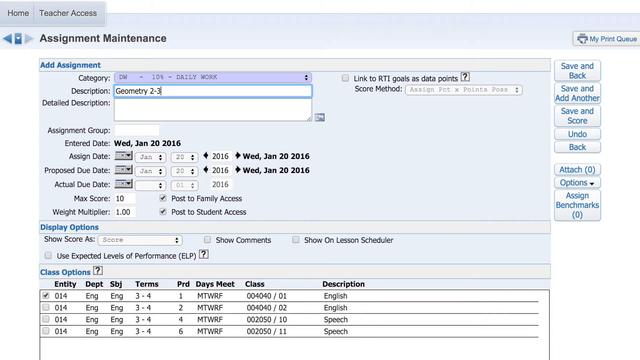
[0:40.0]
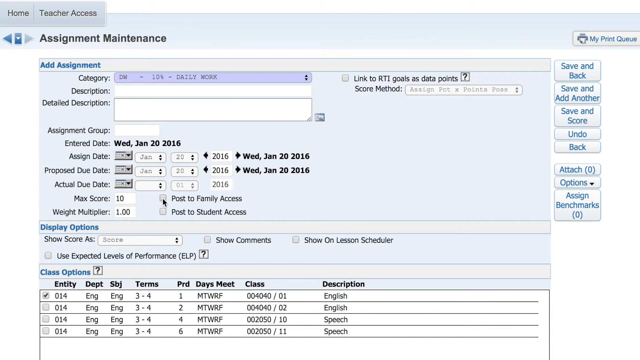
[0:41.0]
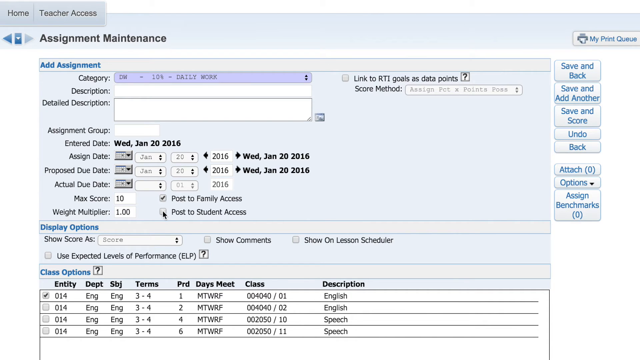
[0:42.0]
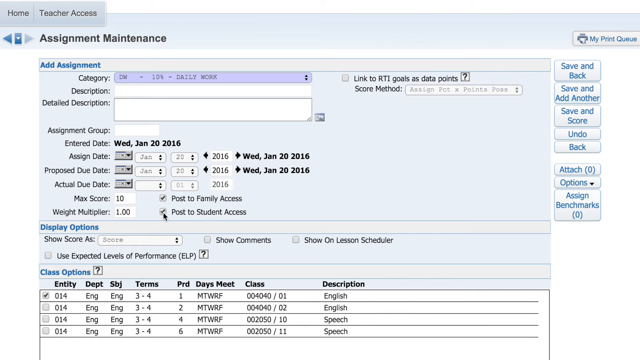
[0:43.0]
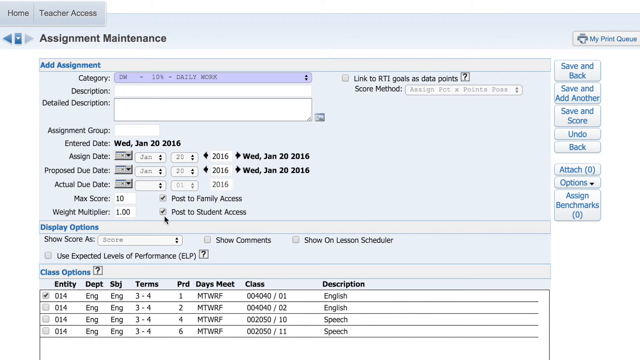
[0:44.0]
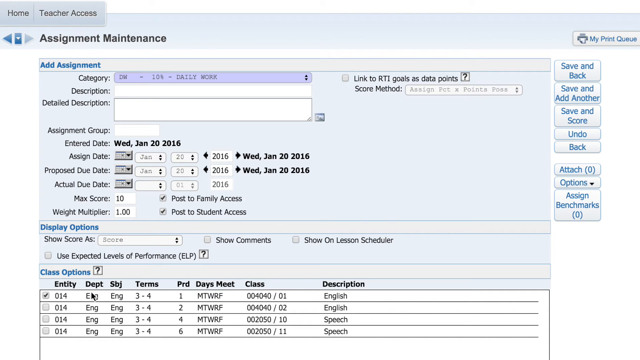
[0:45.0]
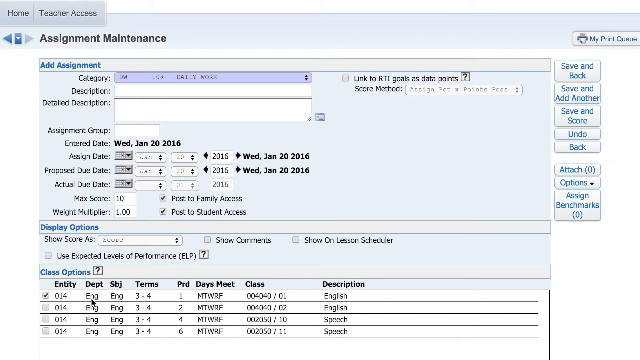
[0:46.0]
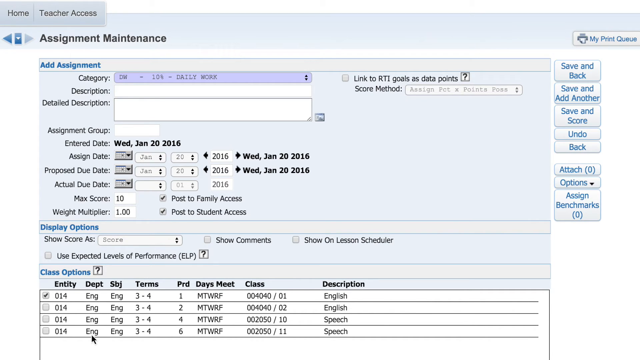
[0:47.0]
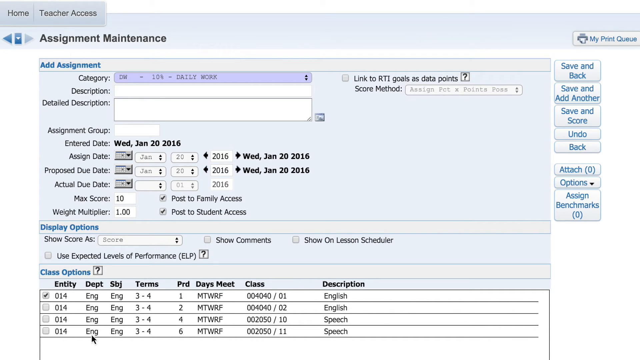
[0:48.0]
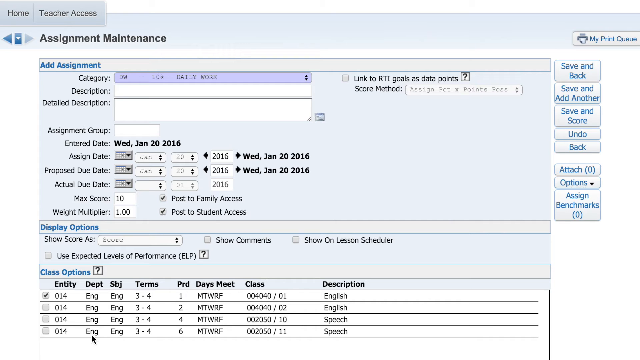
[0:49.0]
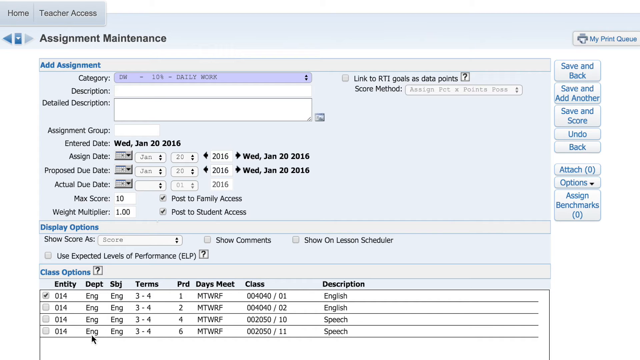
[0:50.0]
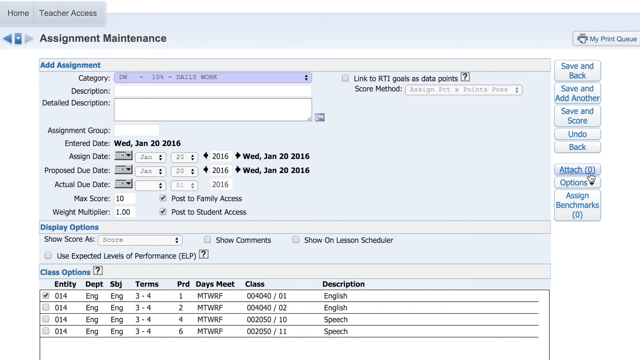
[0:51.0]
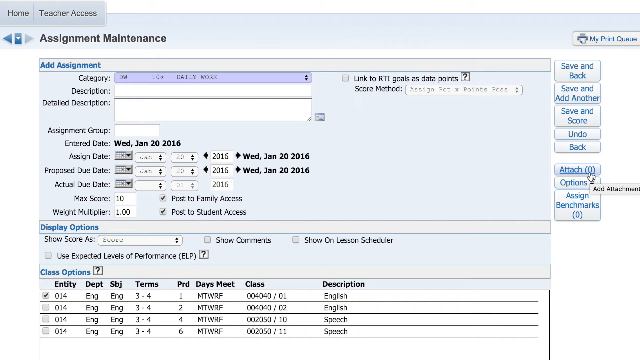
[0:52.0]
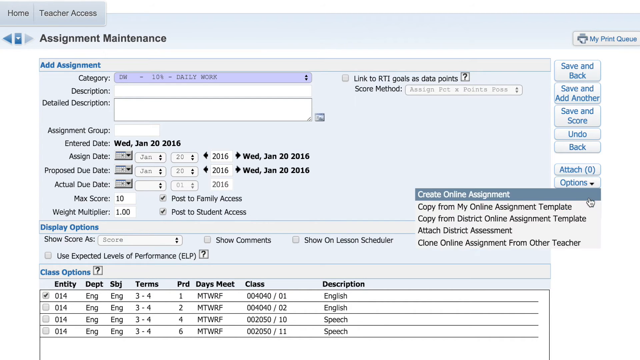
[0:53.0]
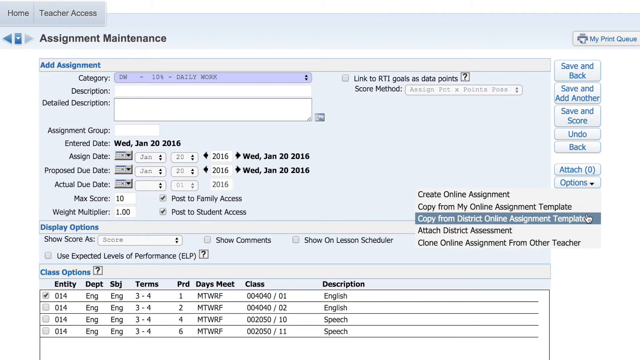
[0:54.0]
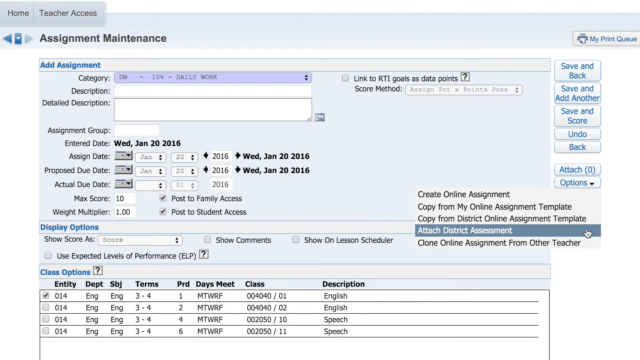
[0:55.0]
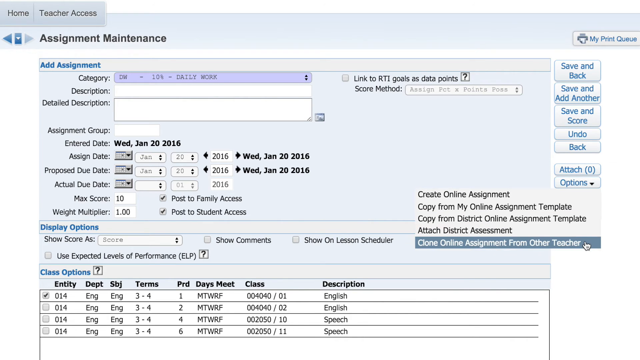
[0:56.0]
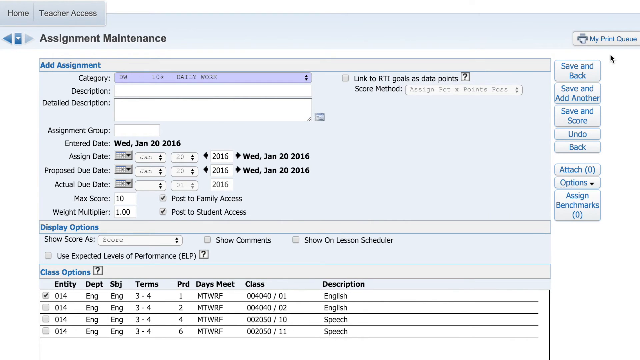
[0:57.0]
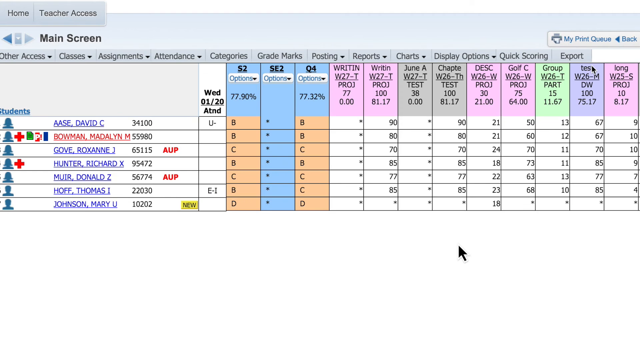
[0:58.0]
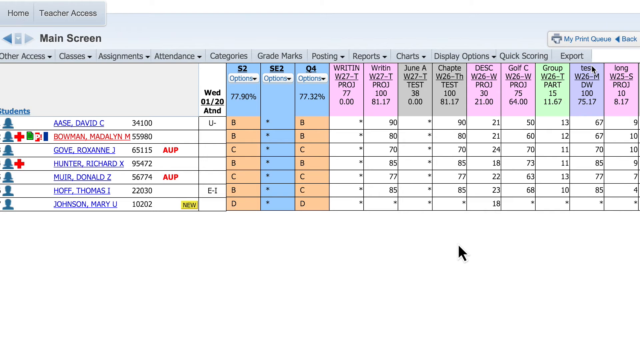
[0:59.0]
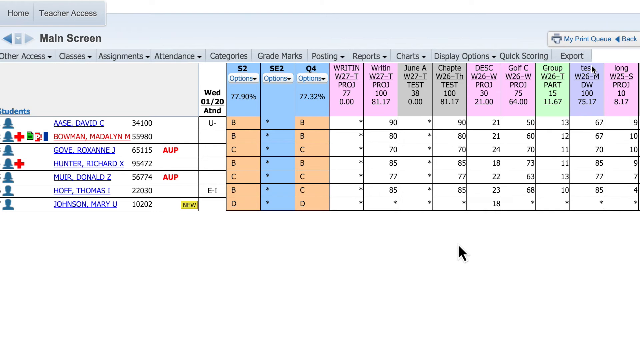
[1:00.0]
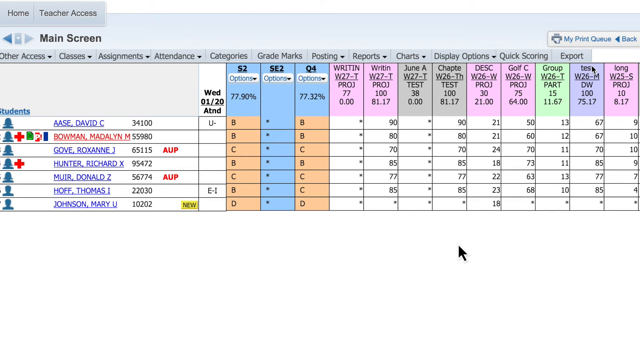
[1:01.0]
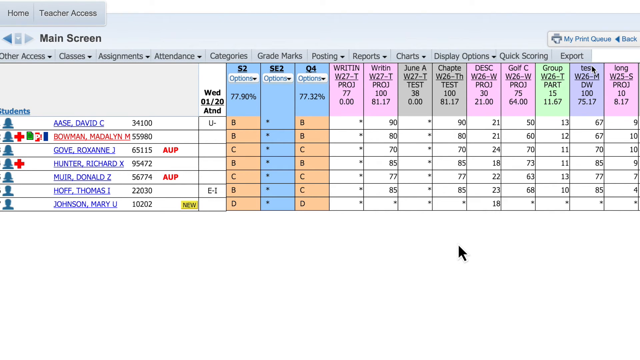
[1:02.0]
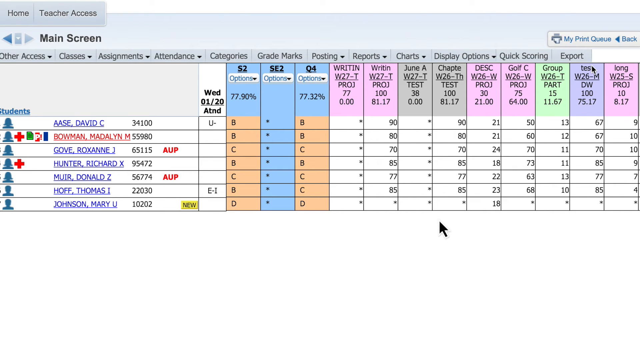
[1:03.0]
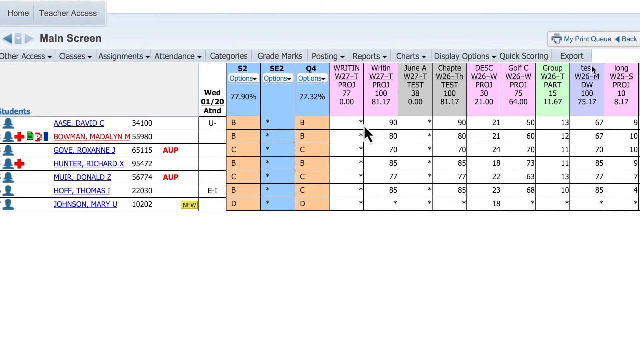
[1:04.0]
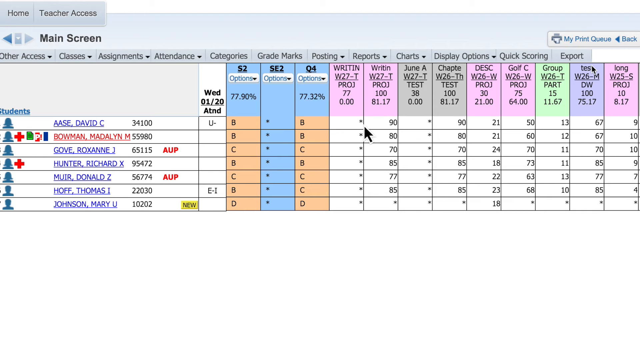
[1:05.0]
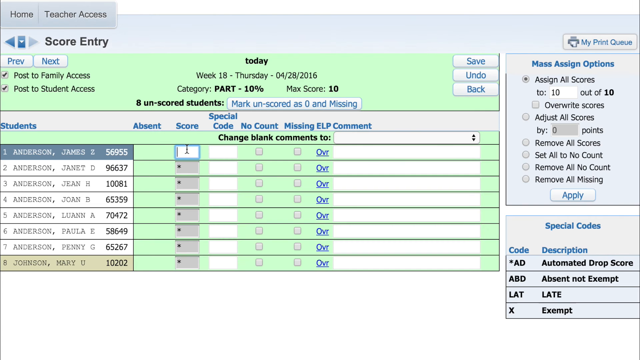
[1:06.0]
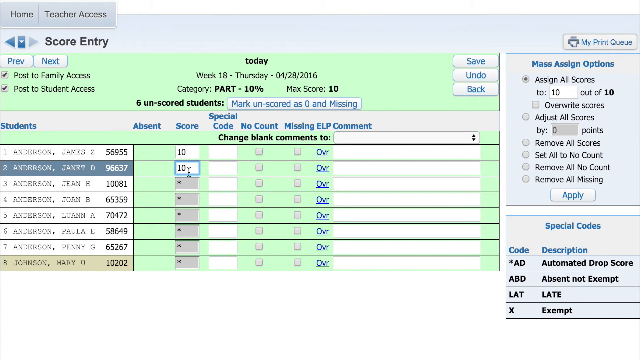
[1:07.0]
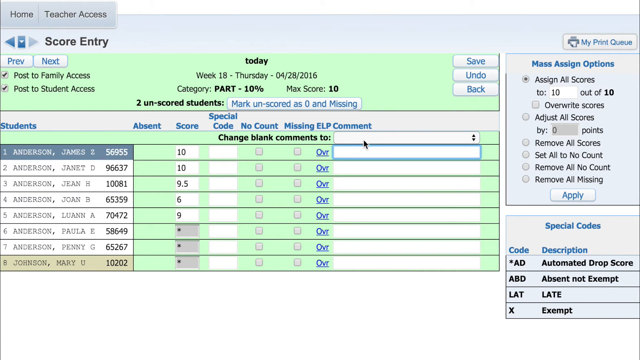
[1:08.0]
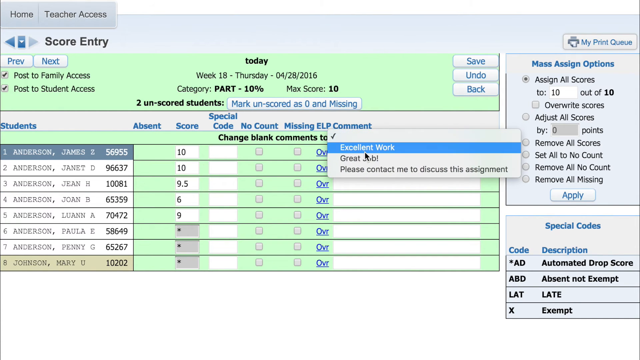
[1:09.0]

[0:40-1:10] The user modifies some parameters on a page that looks complex, with a lot of information to fill in. The title says "Assignment maintenance". The requested information includes categories, description, detailed description, assigned group, dates that can be entered, the date the post was created, the assign date, the proposed due date, the actual date, max score, the weight multiplier, and whether to publish in Family Access and in Student Access; these checkboxes are selected by default. Below is a table with a lot of information, probably related to the school, using several codes or acronyms. Finally, the user returns to the schedule seen earlier, now with some cells colored in a new blue.